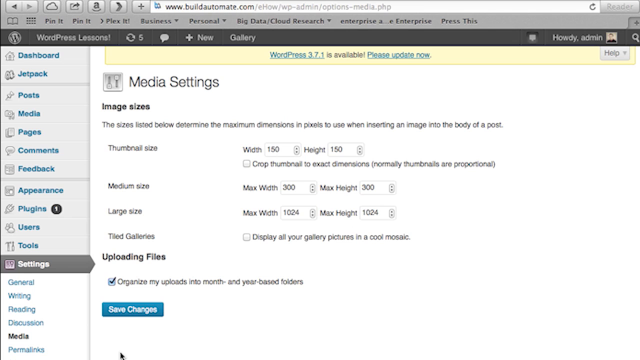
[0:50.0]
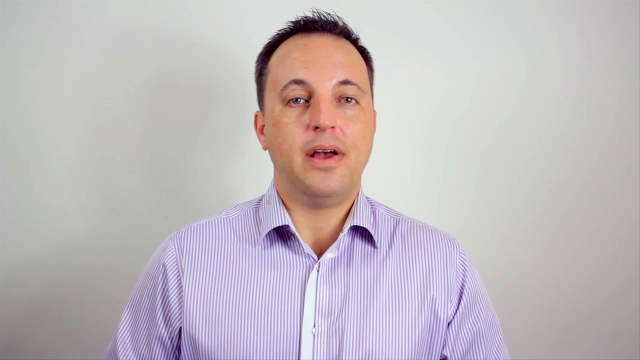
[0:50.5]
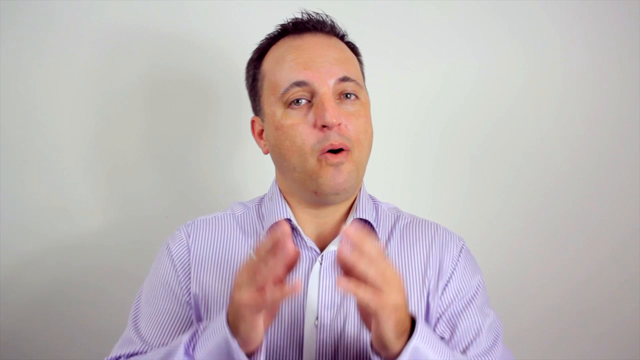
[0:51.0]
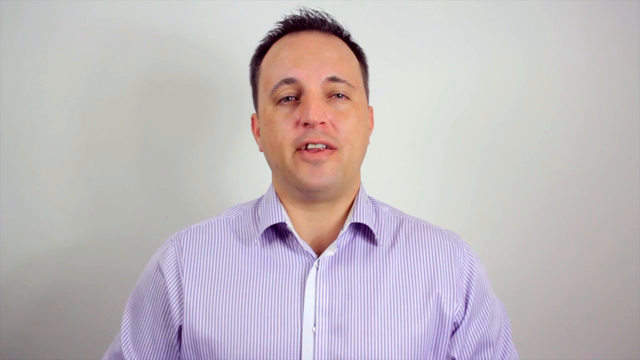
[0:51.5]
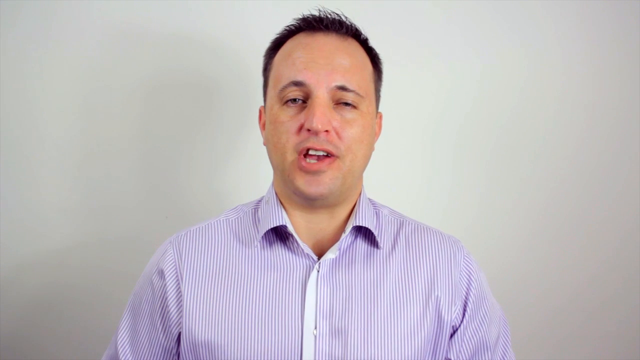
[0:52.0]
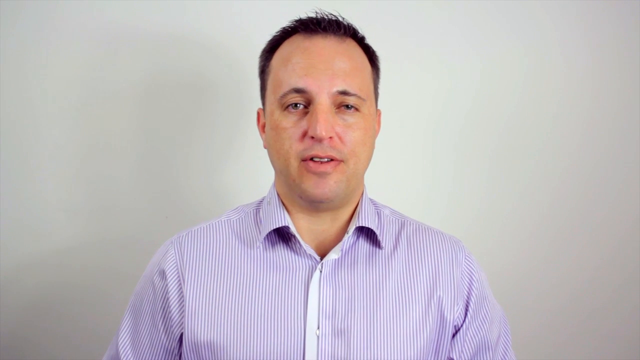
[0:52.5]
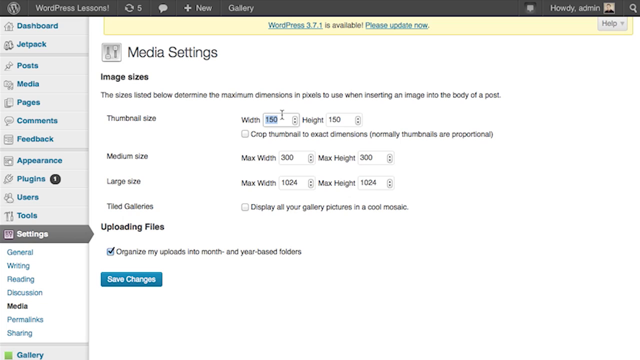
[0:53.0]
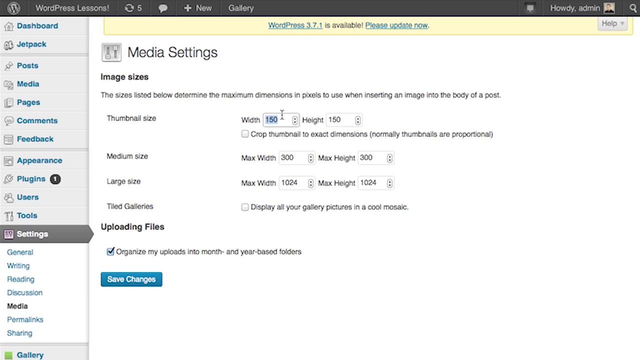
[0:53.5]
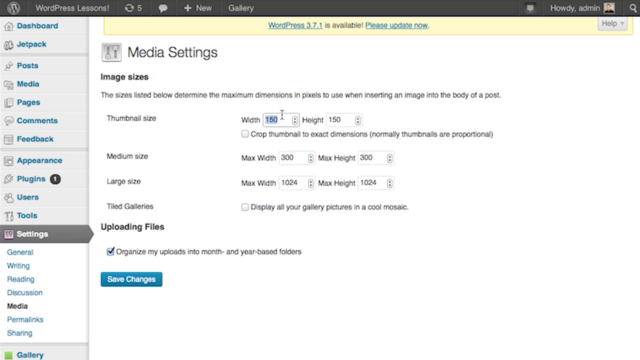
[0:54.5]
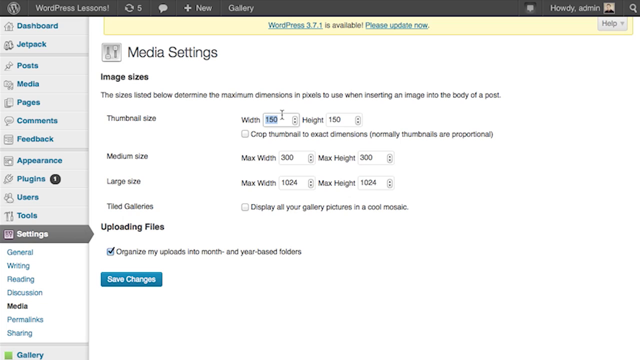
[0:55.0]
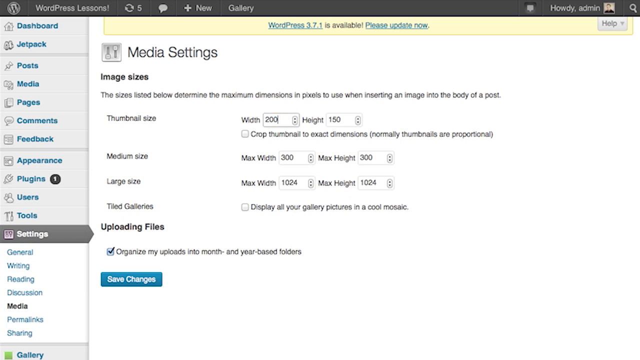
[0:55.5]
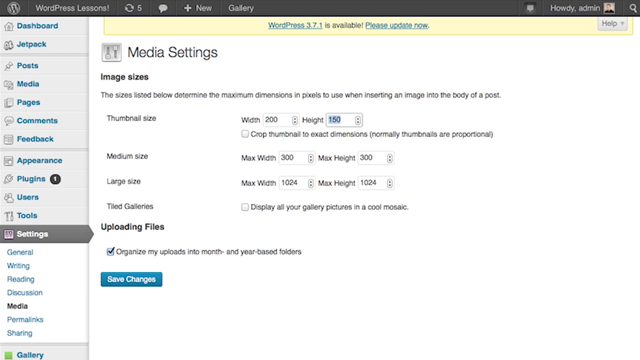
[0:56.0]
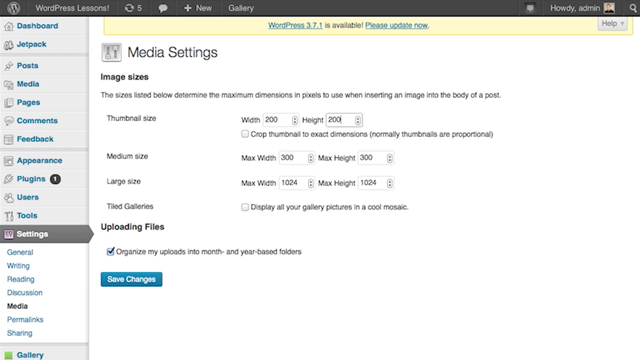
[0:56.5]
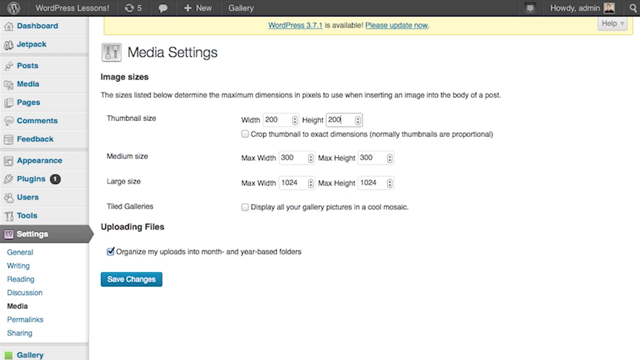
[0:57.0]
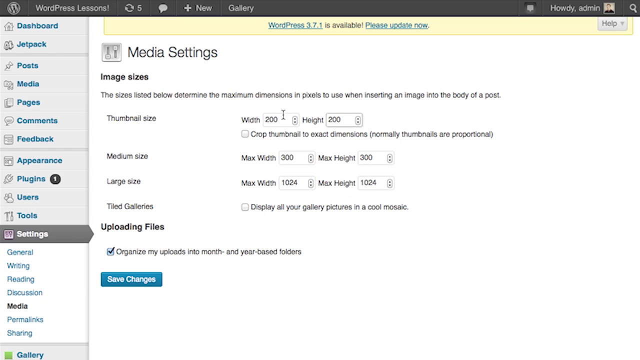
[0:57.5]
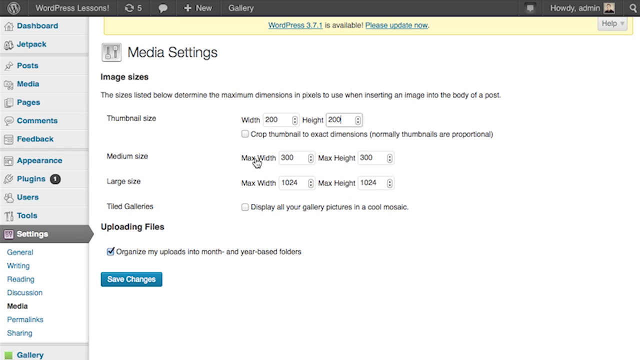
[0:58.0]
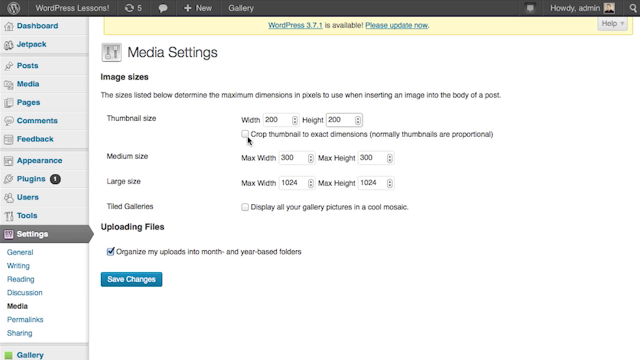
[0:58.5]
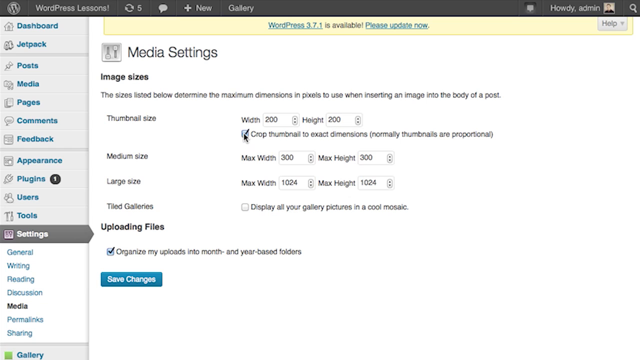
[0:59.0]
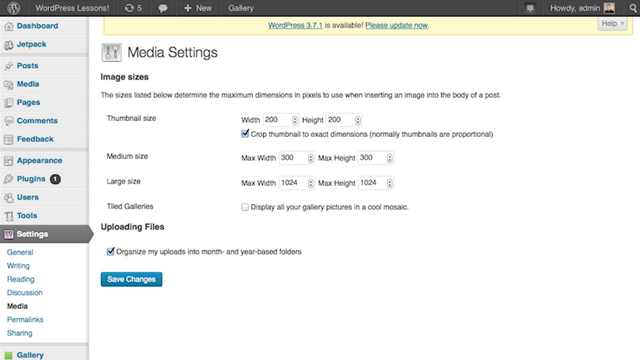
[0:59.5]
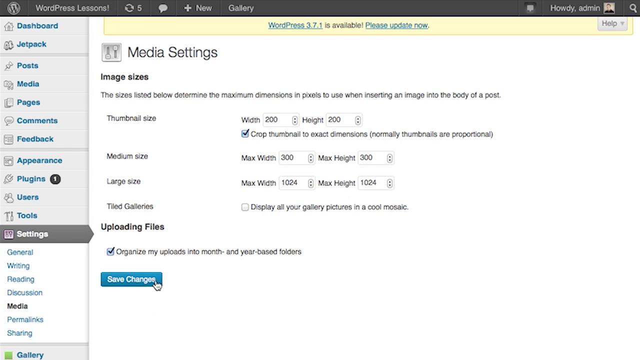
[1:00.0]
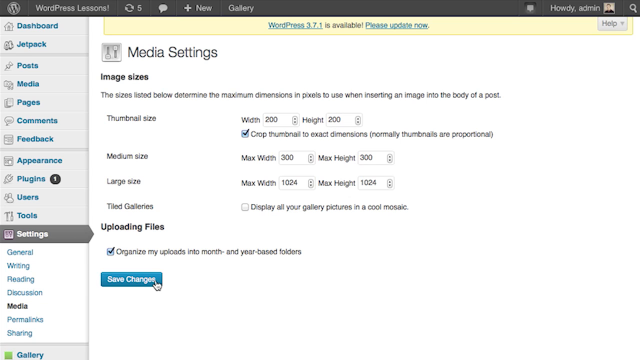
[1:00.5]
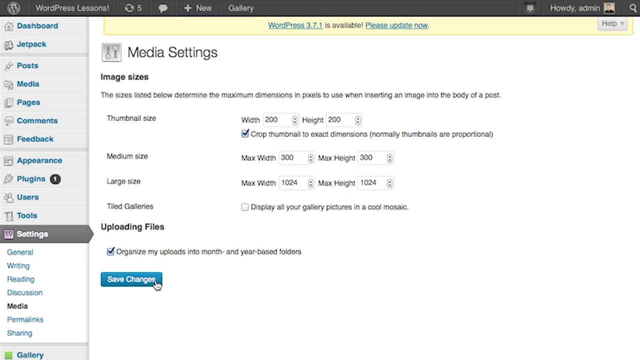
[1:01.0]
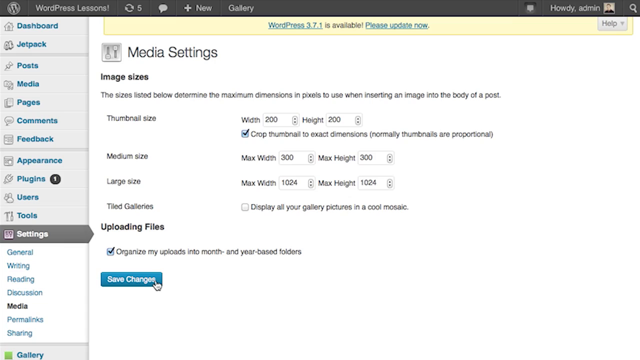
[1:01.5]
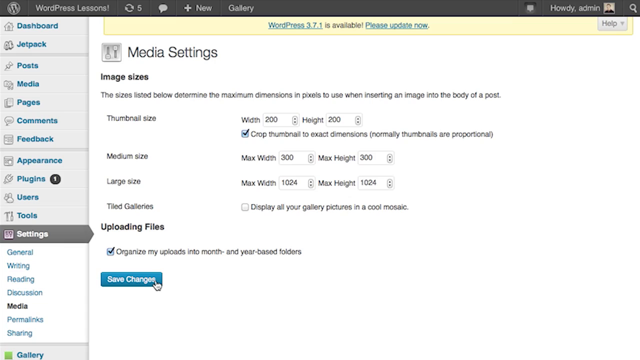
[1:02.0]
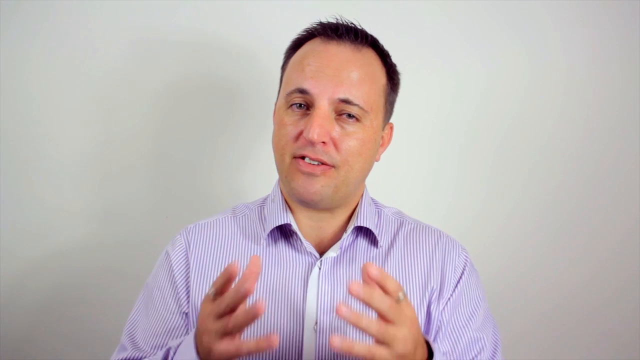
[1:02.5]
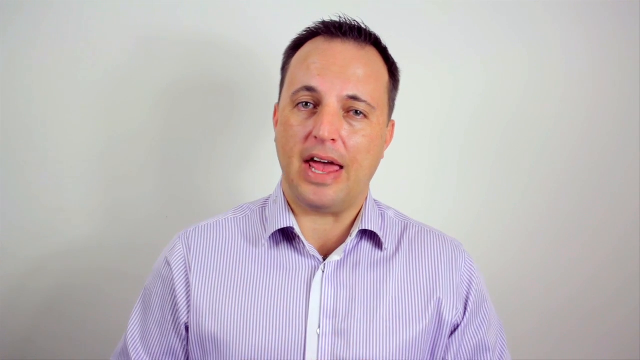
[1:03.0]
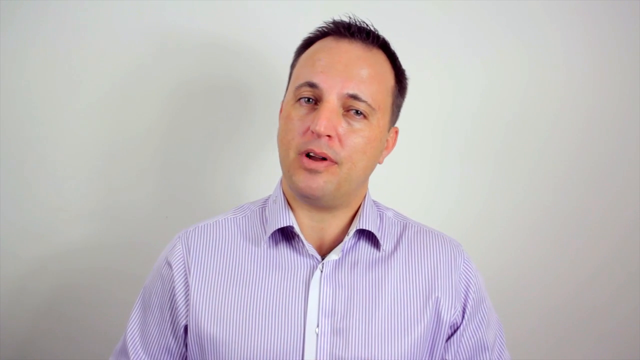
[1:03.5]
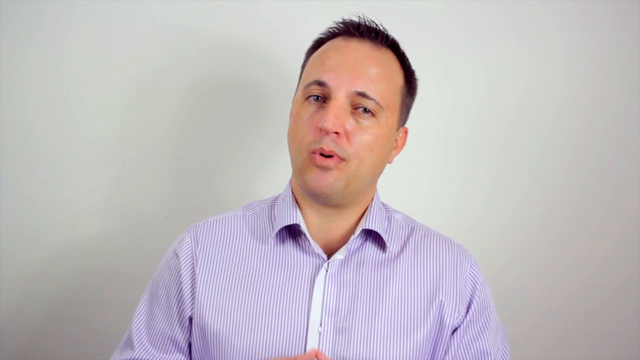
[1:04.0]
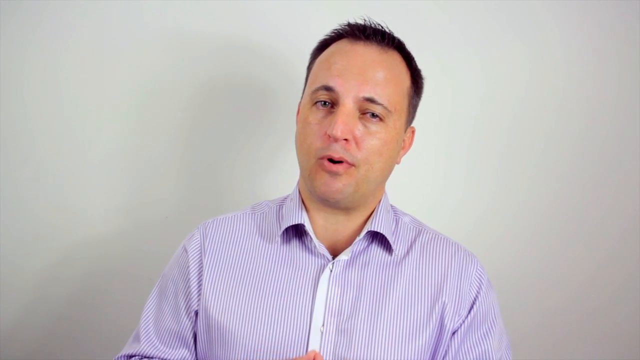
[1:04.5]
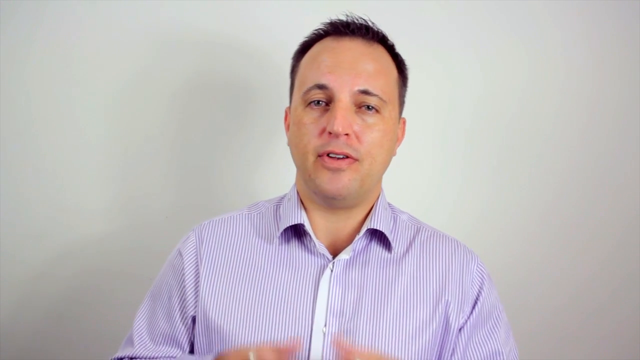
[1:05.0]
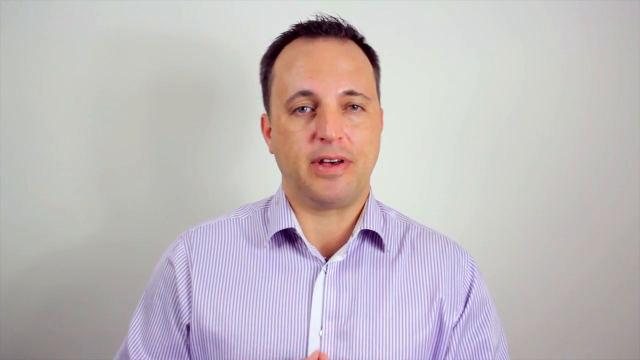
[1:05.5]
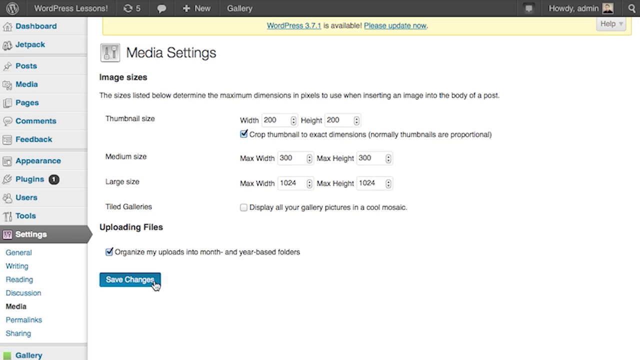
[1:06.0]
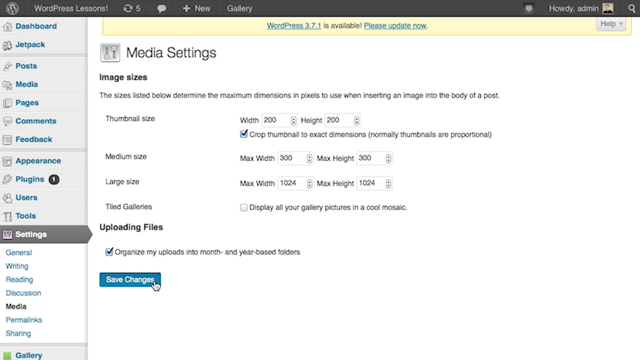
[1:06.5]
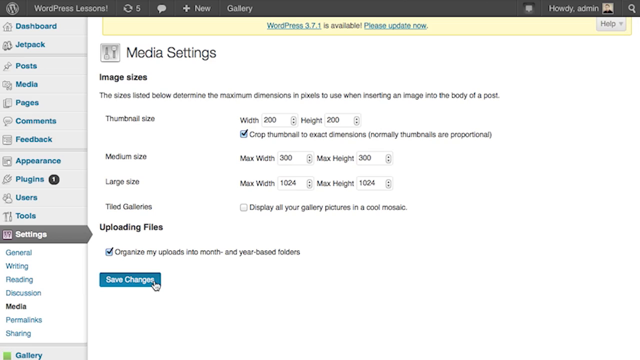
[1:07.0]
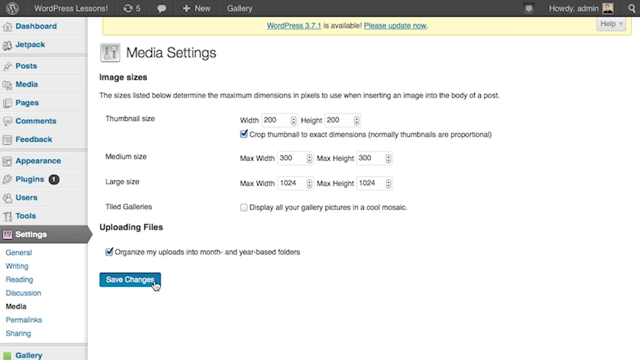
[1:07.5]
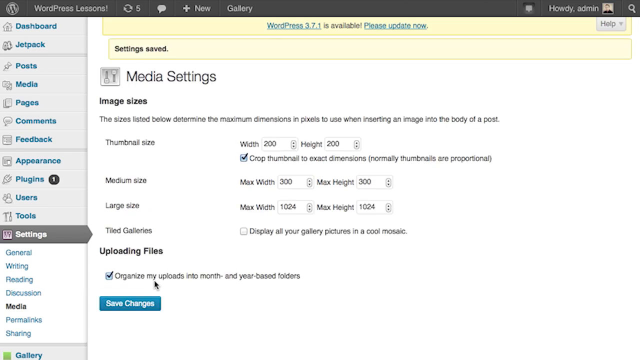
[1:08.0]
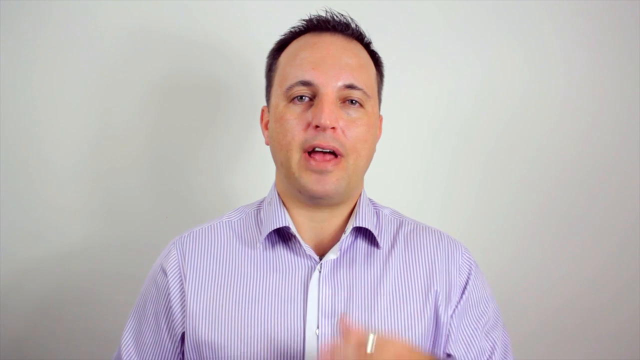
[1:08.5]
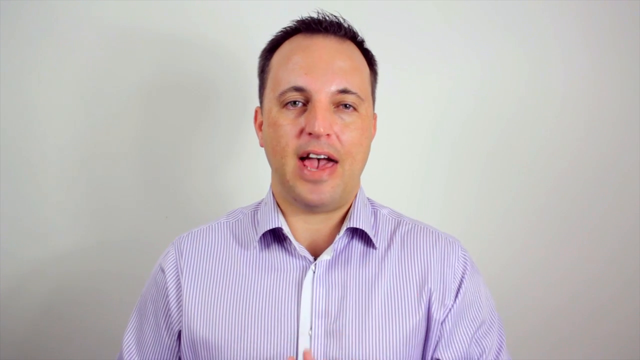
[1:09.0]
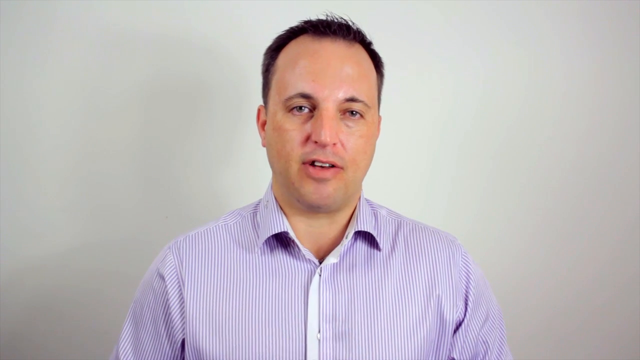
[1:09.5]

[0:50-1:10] The man is still talking; his hands move briefly up toward the screen before moving down rapidly again. On screen, the user seems to have clicked on some of the media settings options and changes the thumbnail width and height to 200 and 200 in number input boxes. The user also clicks a checkbox whose text reads "crop thumbnail to exact dimensions normally thumbnails are proportional", then clicks the save changes button. The video cuts to him speaking toward the camera, making a few gestures with both hands together that move up and down briefly into view. There is another shot of the website, then another of him, this time with his left hand moving slightly into view and quickly back out.